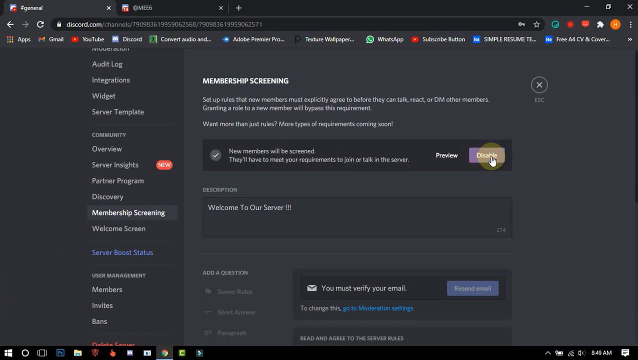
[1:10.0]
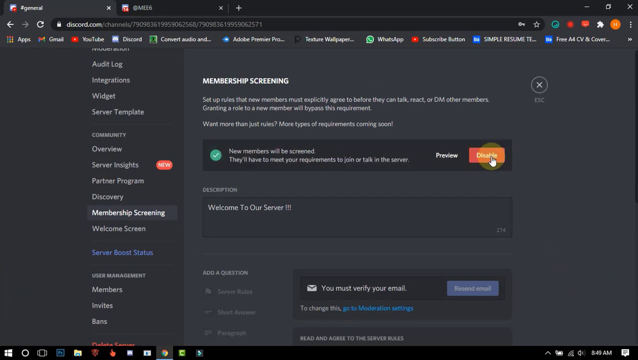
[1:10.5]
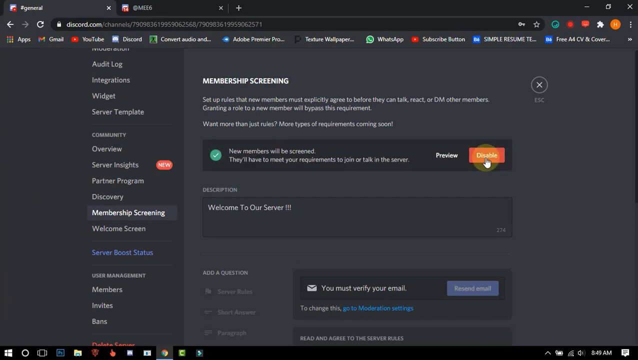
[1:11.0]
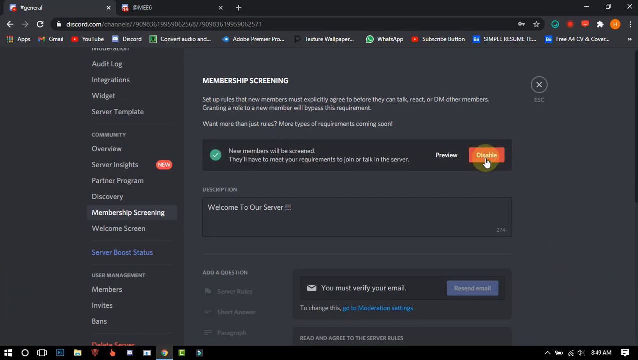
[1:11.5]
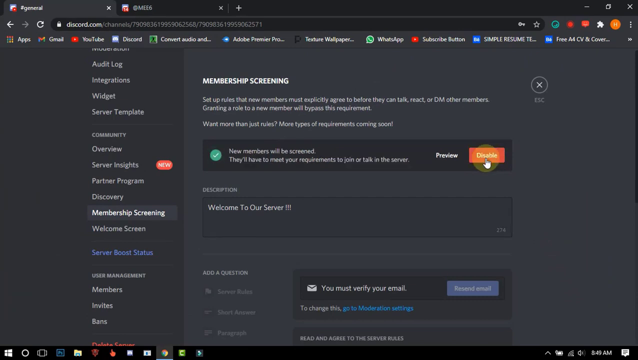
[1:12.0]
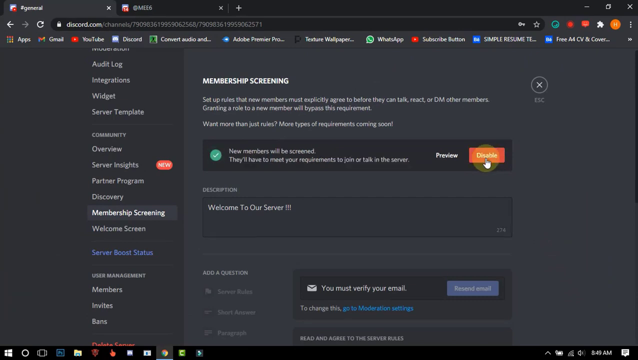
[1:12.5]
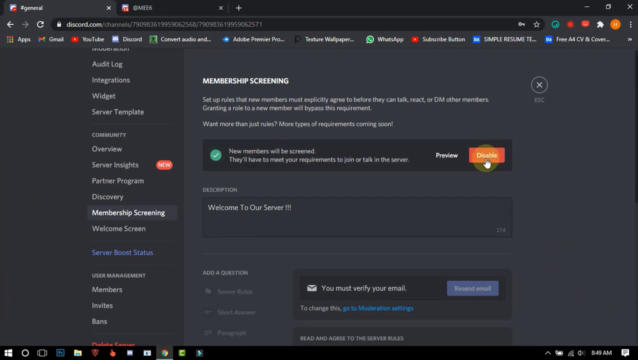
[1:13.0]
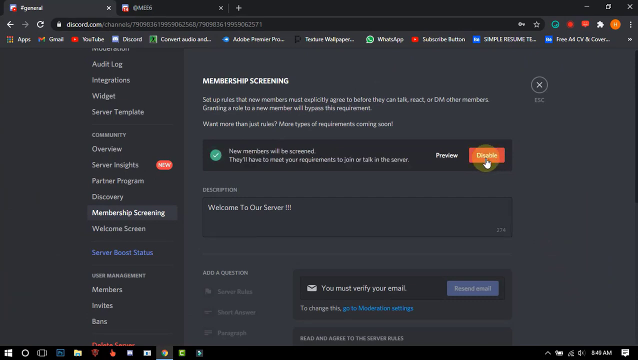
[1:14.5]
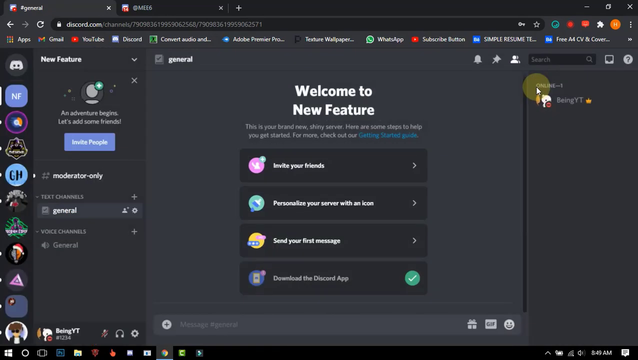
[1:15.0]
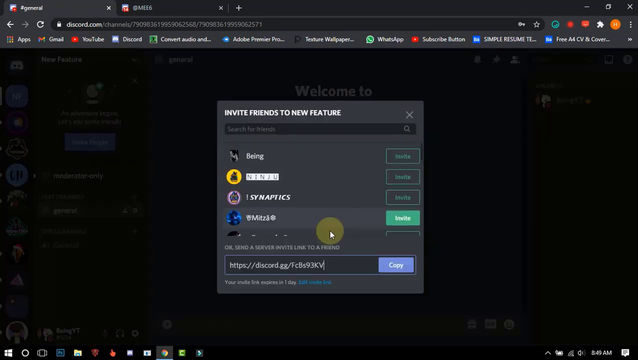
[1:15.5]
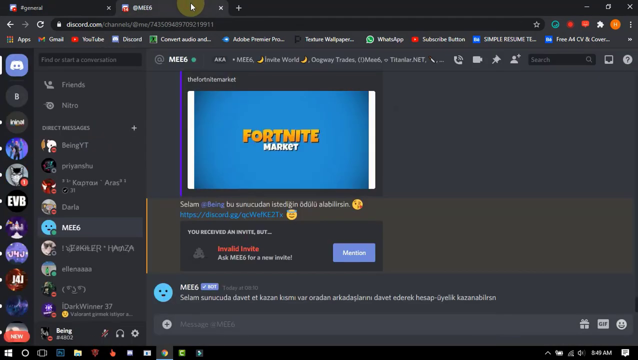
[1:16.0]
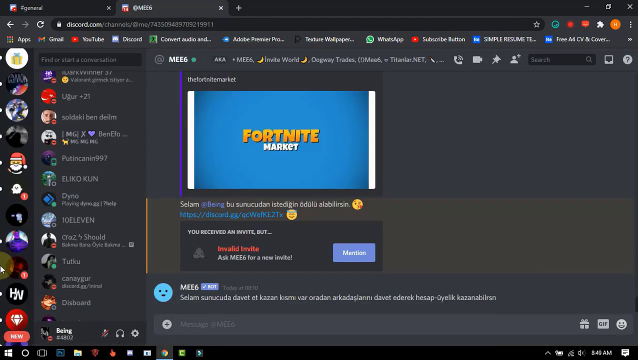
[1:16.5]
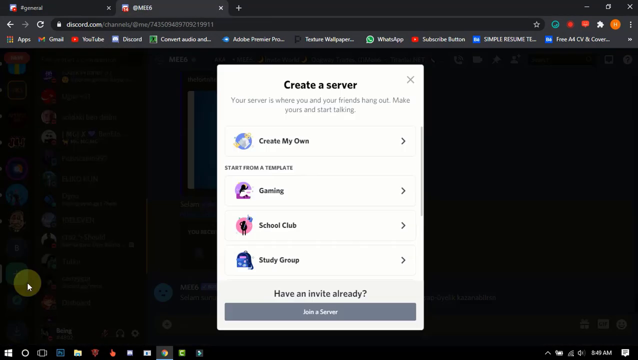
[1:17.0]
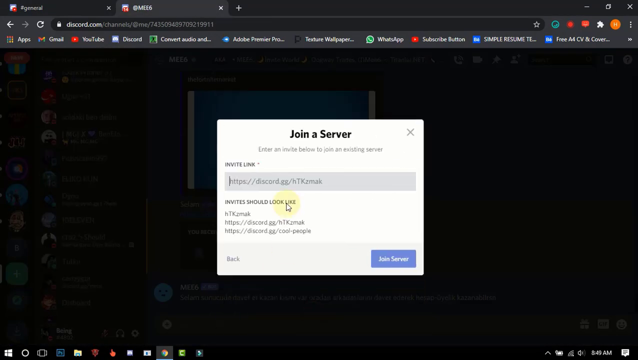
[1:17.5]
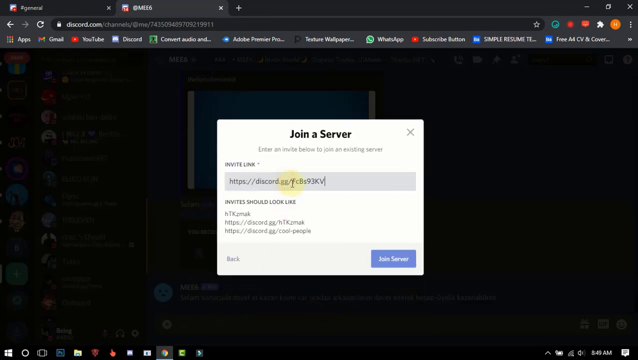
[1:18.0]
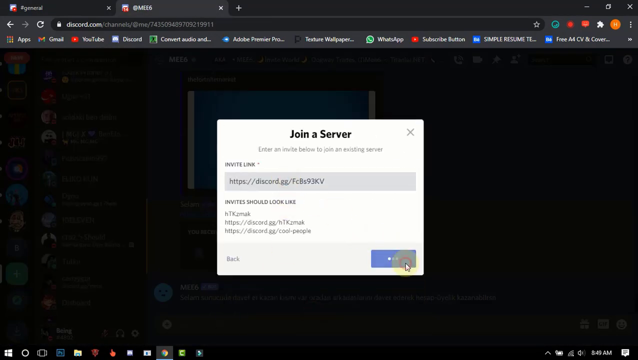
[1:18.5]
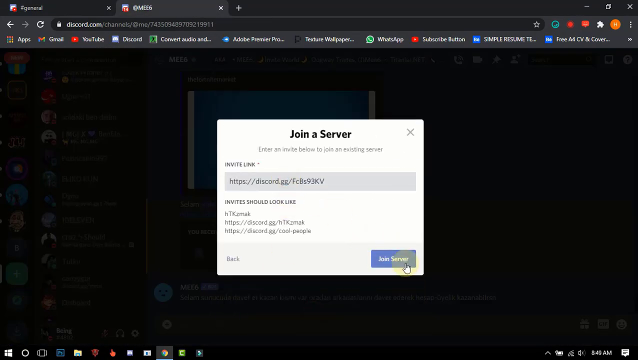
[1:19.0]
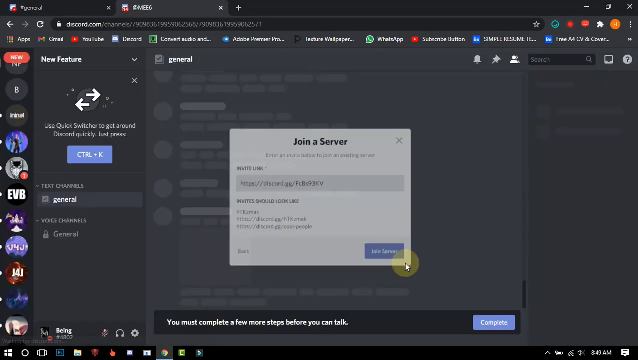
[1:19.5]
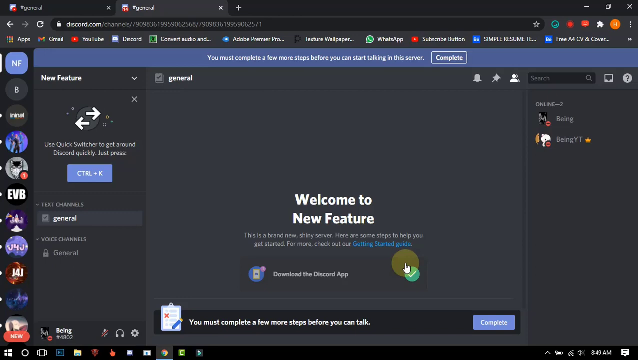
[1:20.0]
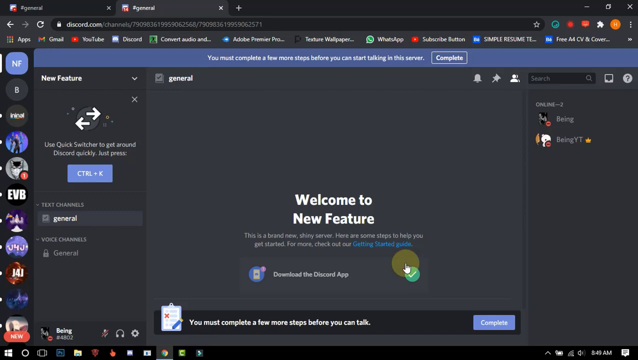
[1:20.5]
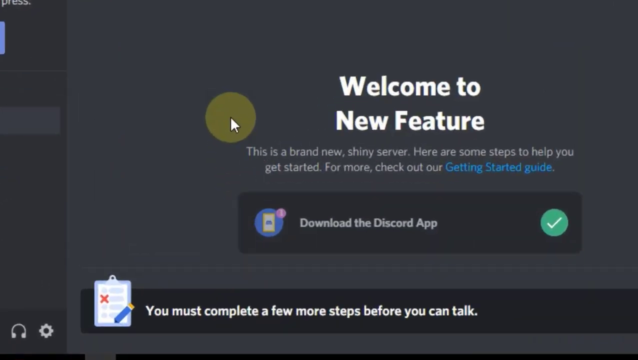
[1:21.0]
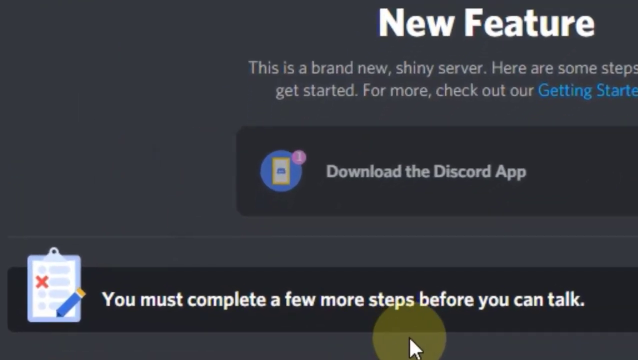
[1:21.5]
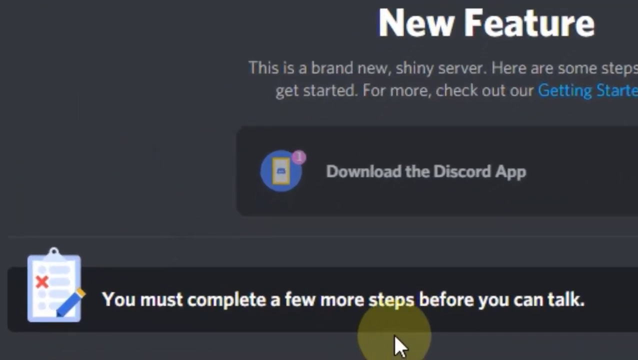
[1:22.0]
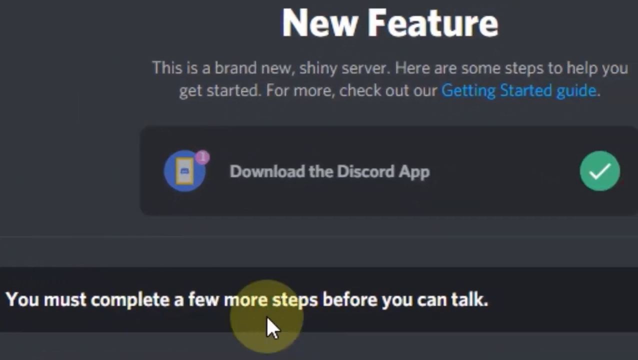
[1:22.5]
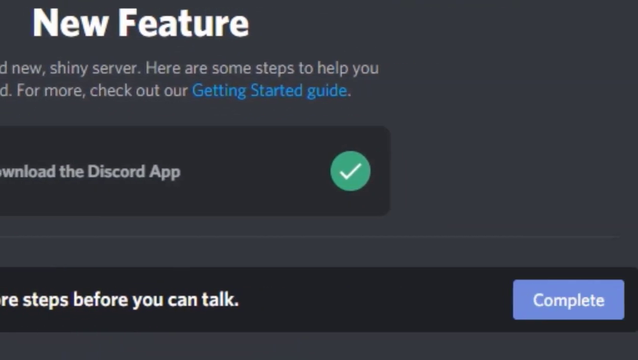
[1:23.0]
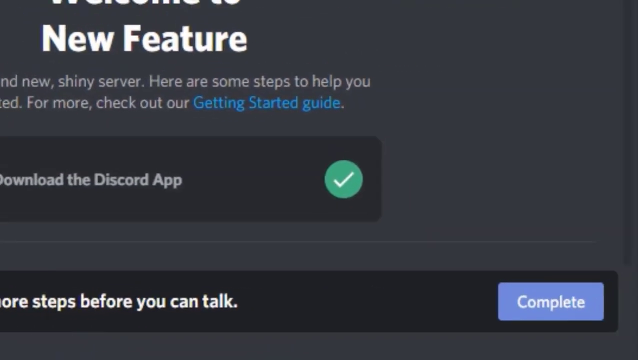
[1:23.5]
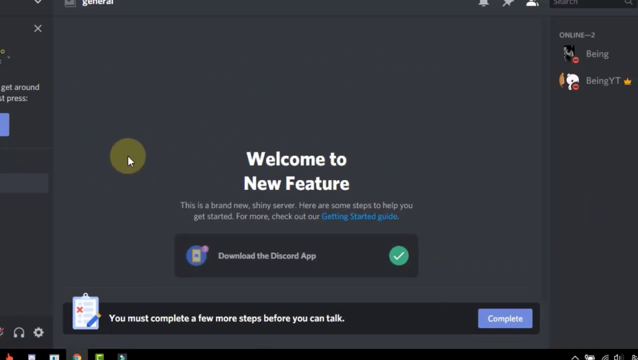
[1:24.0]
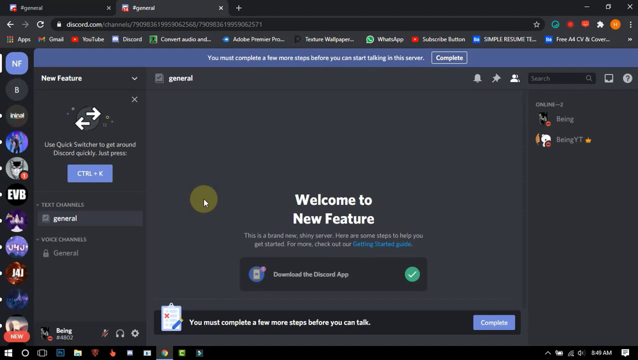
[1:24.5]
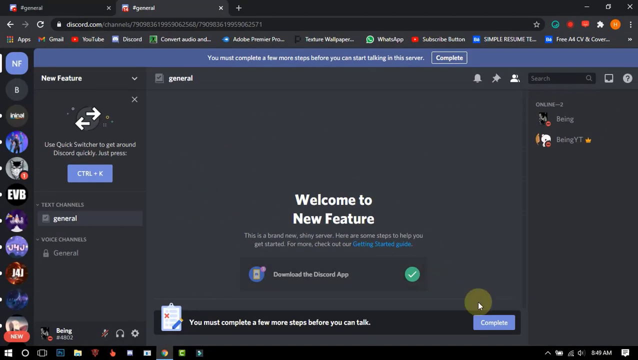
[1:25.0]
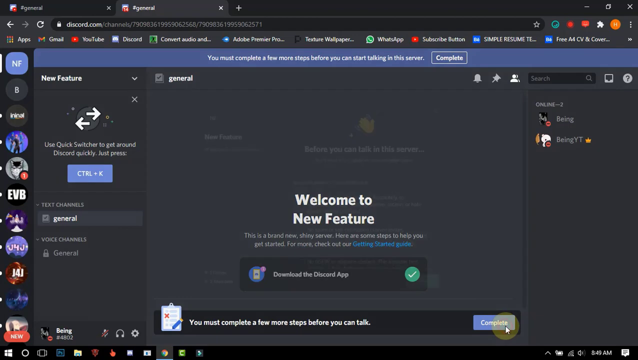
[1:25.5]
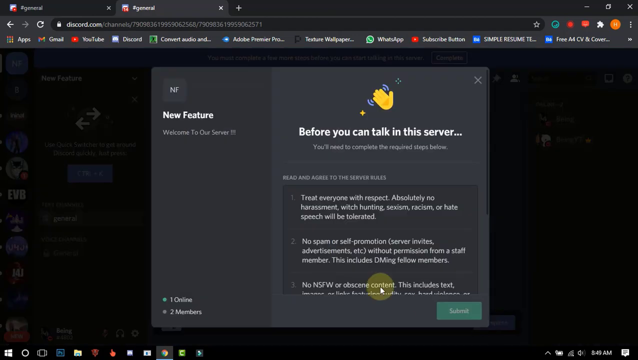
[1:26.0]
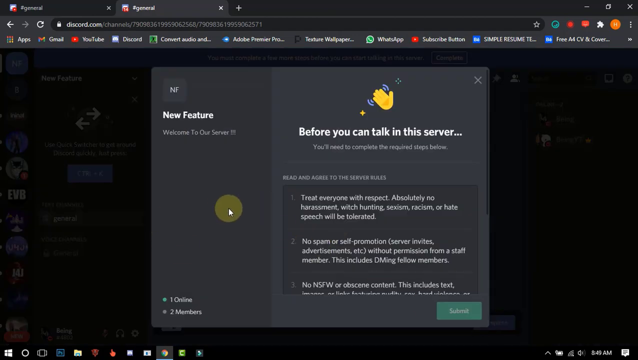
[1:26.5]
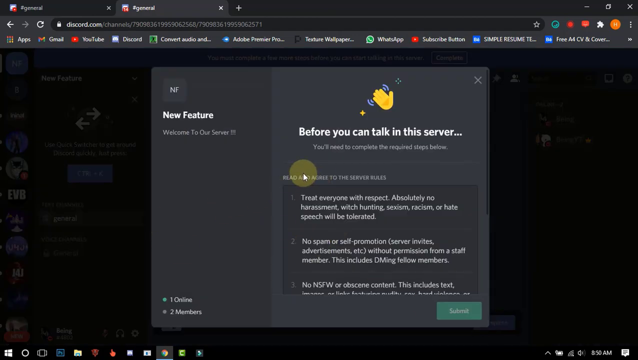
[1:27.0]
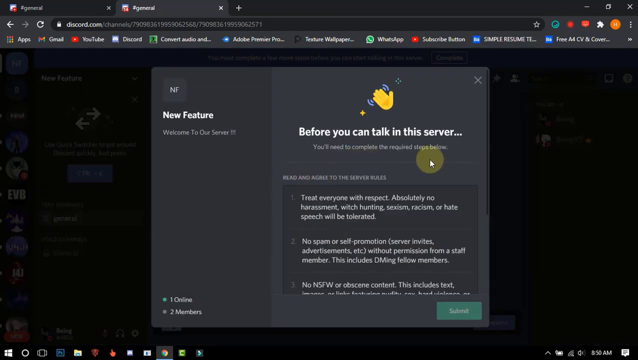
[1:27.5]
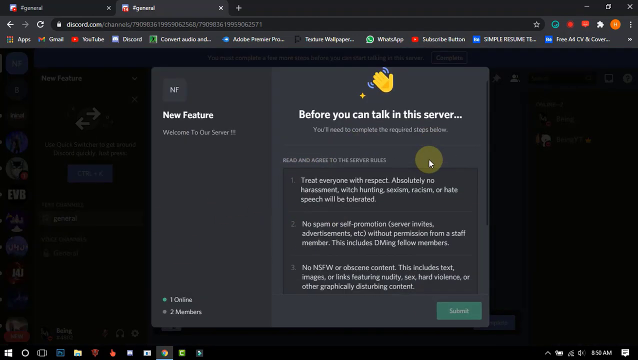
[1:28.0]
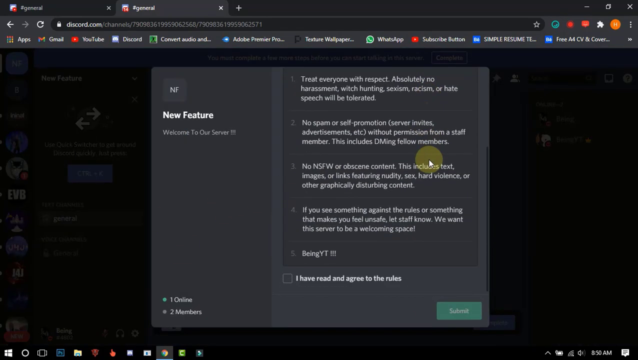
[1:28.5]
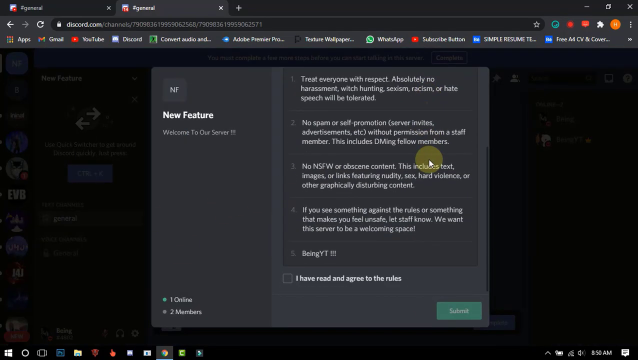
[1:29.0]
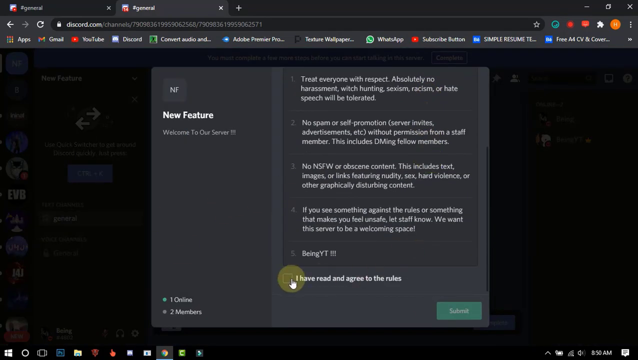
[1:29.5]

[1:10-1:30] Once the enable button is clicked, it turns red and a green checkmark appears in front of the box; the rules have been enabled on the server. The user moves the mouse very fast, clicks the X to close the Membership Screening menu, and goes back to the New Feature menu on the main screen of the Discord website, then selects "Invite Friends to New Feature". A pop-up menu comes up, which the user closes. The user goes through a list of icons on the left-hand side of the screen and clicks one of them, bringing up a text box that reads "Join a Server" with an invite link. The user clicks the text box with the invite link and selects the blue clickable button that says "Join Server". The server is joined, with the text "Welcome to new feature". The camera zooms in on text that says "You must complete a few more steps before you can talk", and the user navigates to a button reading "Complete" and clicks it. A pop-up appears that says "Before you can talk, you will need to complete the required steps" and shows a list of the rules that were created. The user scrolls down, selects "I have read and agreed to all terms", and selects the clickable button at the bottom of the menu.